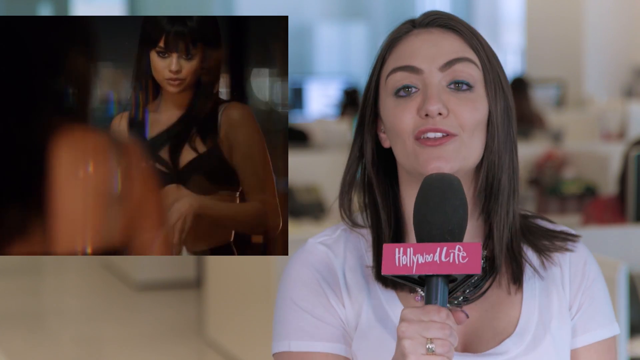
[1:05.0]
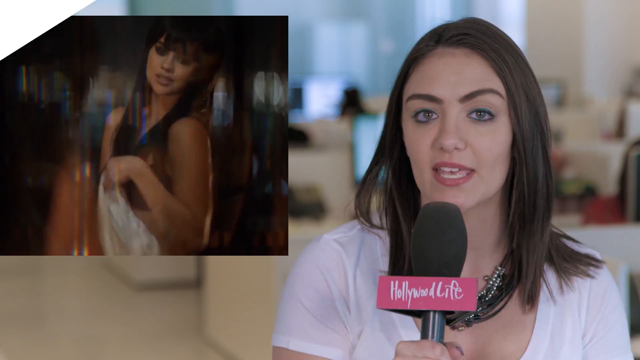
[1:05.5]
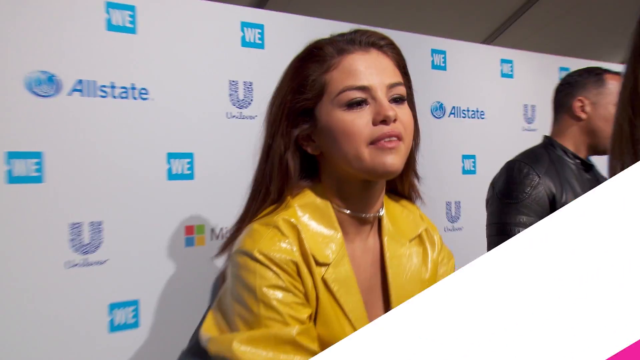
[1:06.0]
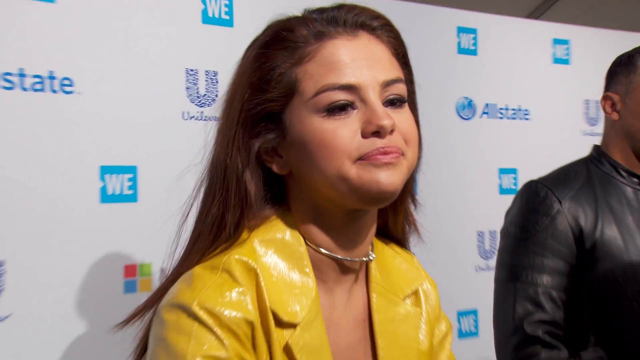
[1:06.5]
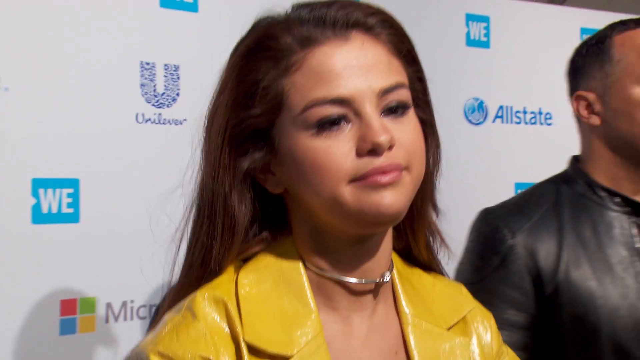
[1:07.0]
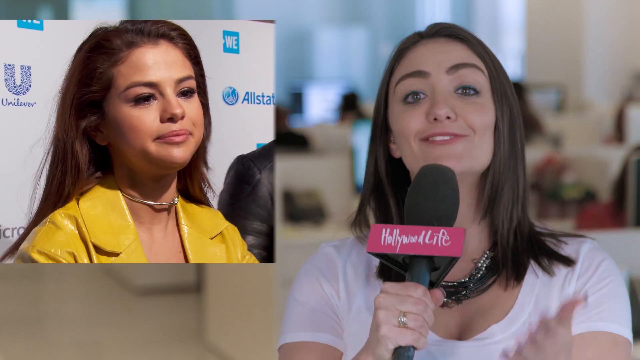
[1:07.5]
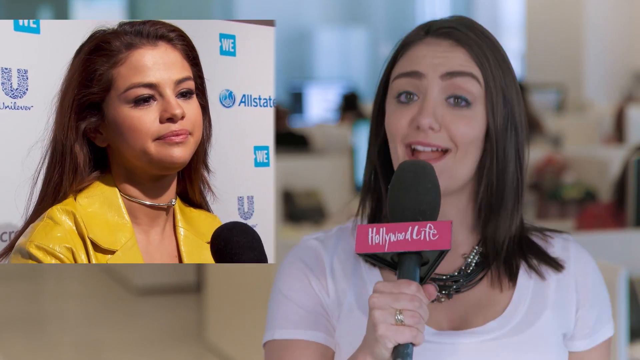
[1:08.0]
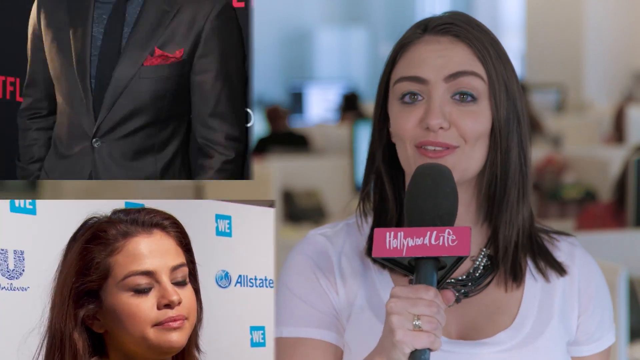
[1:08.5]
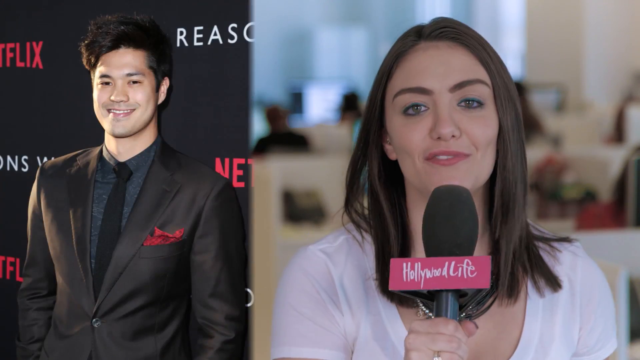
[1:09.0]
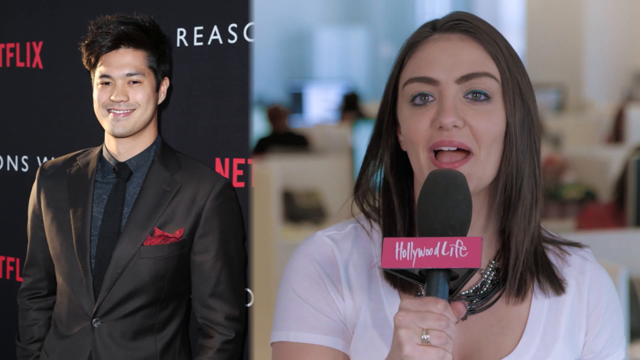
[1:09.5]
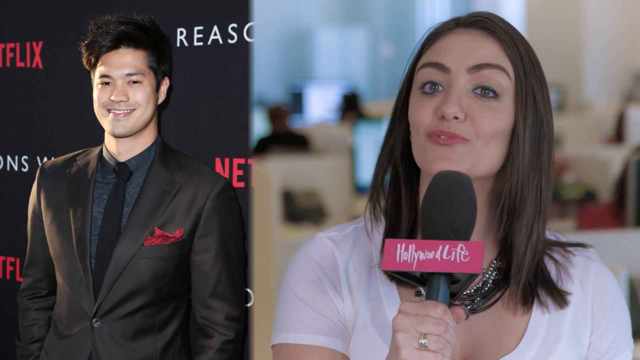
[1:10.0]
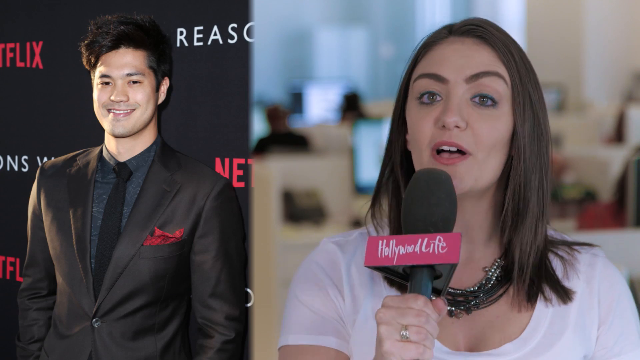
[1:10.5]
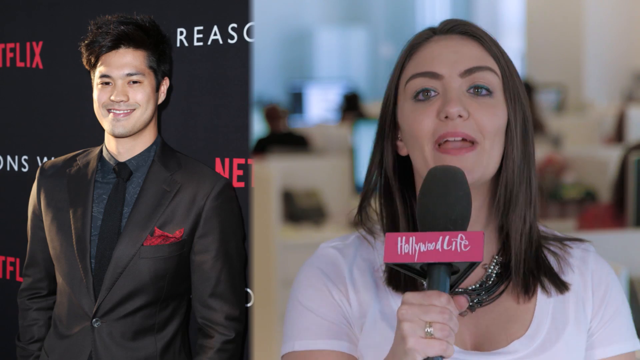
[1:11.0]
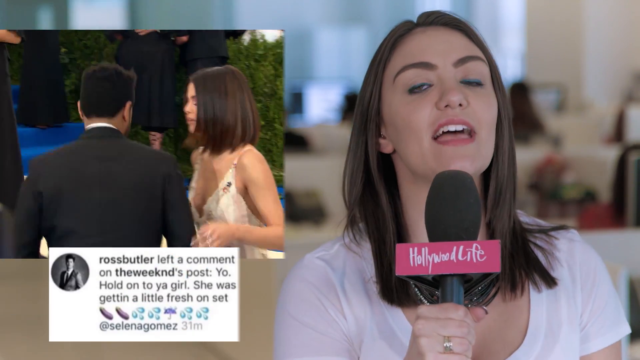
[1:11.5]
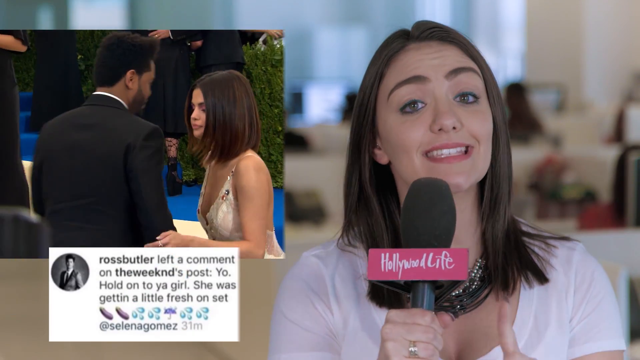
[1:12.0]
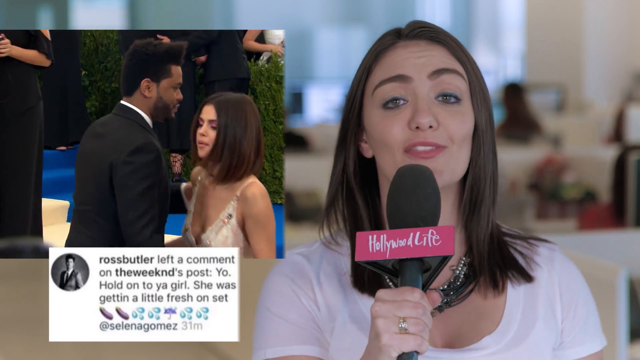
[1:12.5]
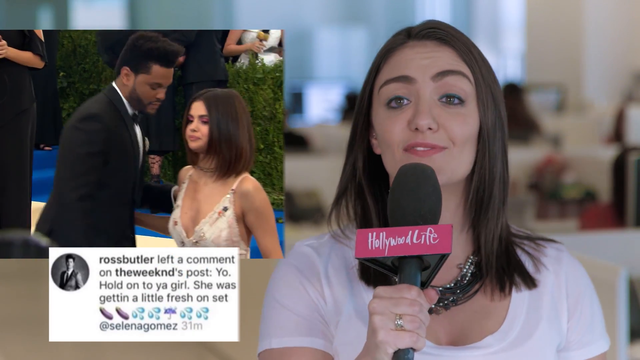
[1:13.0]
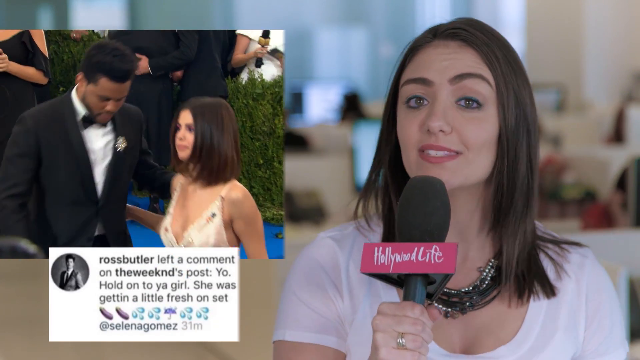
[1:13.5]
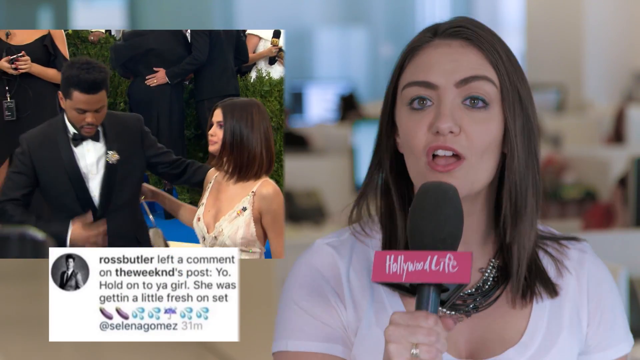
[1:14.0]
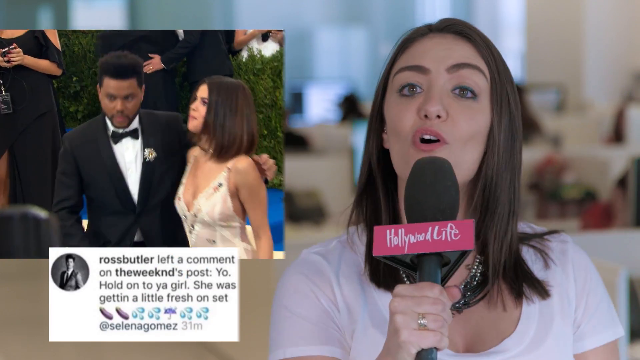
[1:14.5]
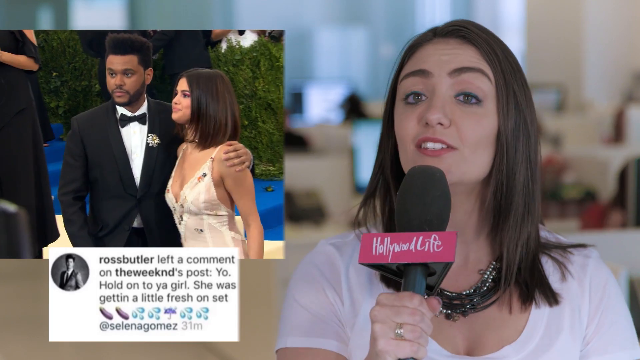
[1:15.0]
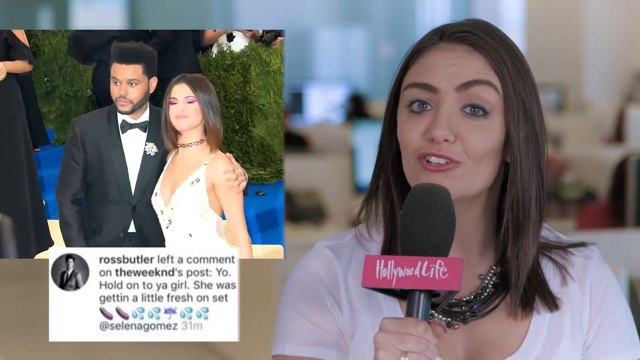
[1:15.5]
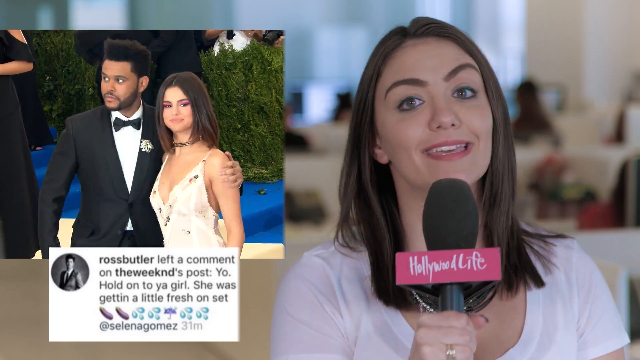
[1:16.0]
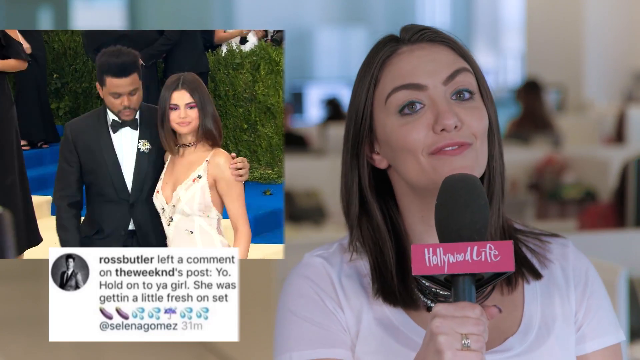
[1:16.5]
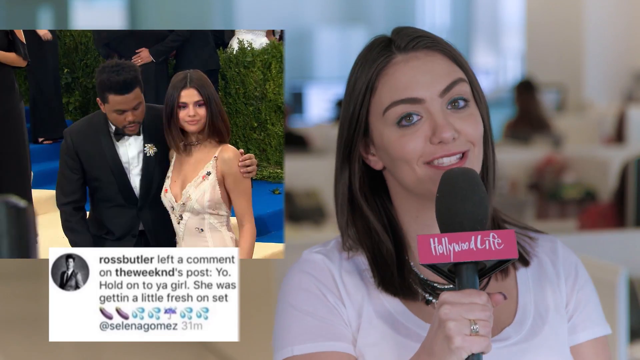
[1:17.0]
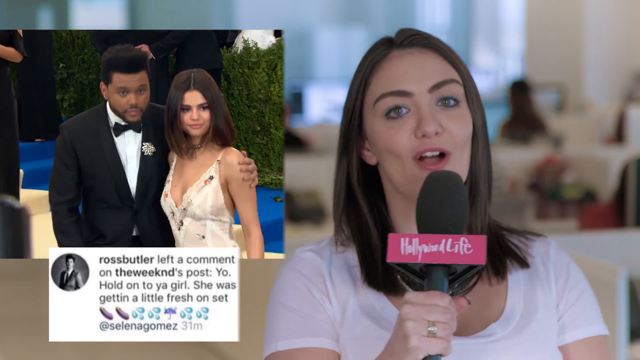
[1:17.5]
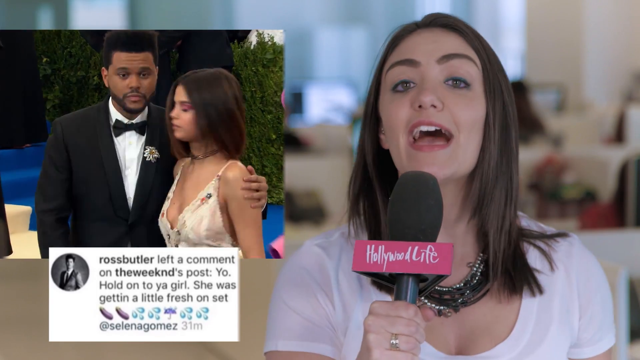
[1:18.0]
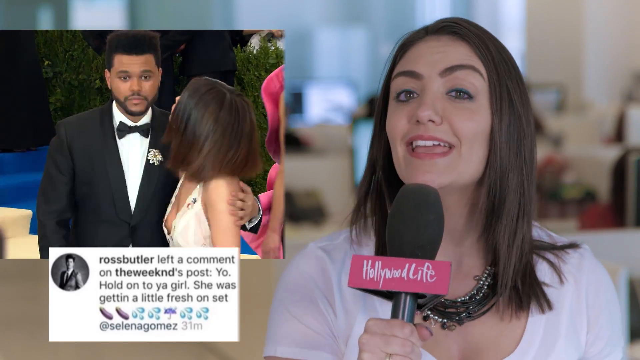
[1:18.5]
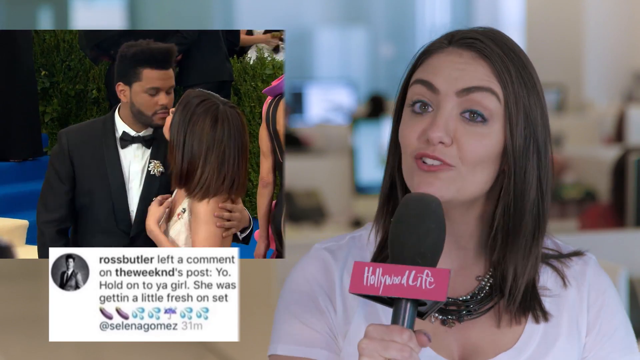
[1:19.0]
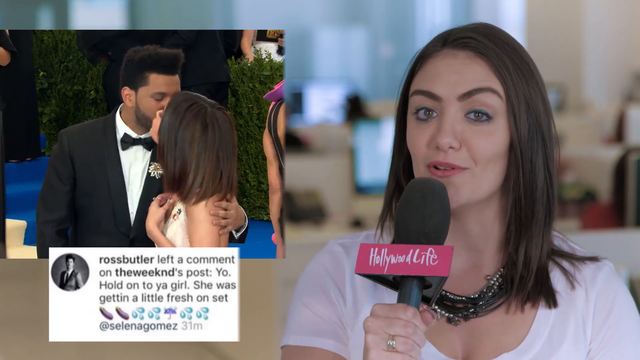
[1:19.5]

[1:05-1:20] The Hollywood Life reporter looks at the camera and speaks into her microphone, very animated. To the left of her, superimposed videos constantly come and go: first one of Selena Gomez, then one of a cast member of 13 Reasons Why, then Selena Gomez again. What looks like a Twitter tweet is superimposed, partly obscured by a graphic that says "more video over". The tweet appears to show a comment left by someone named Butler on The Weeknd's post, including the words "She was getting a little fresh on set."